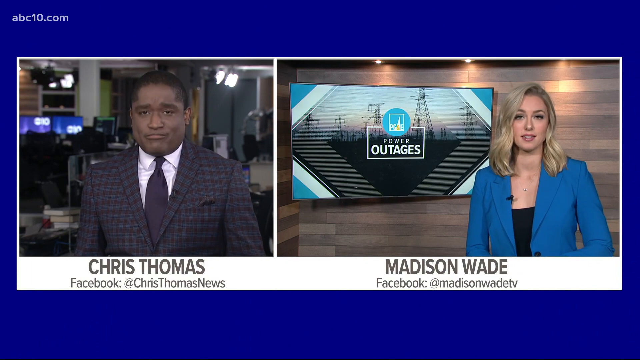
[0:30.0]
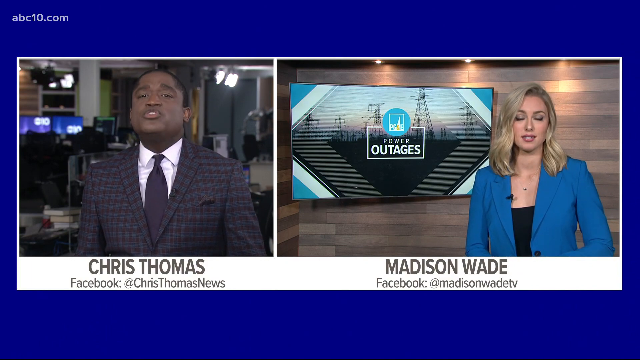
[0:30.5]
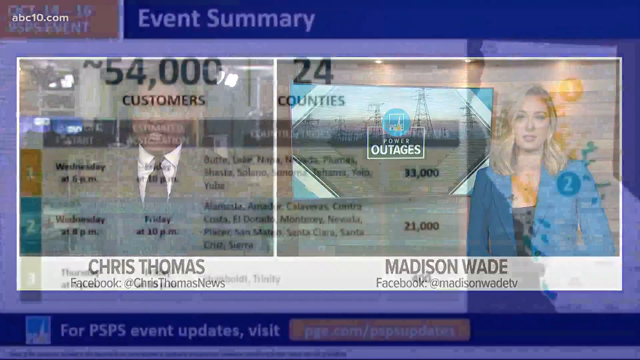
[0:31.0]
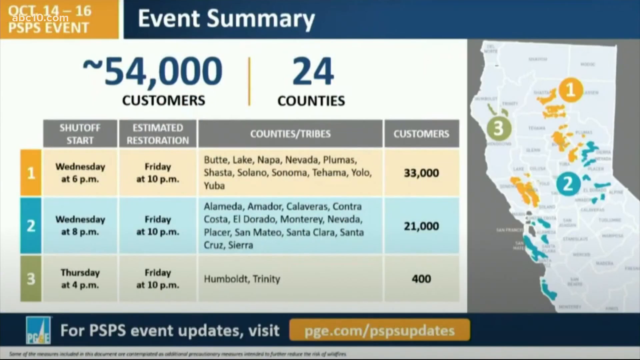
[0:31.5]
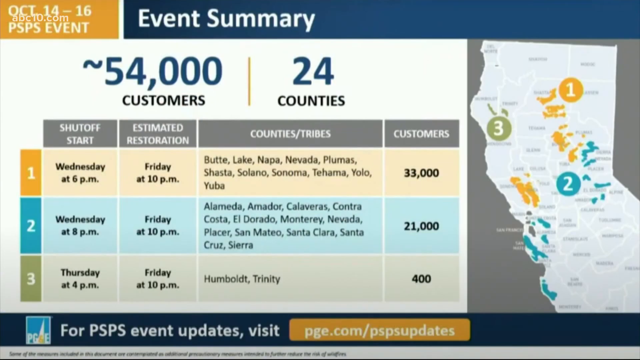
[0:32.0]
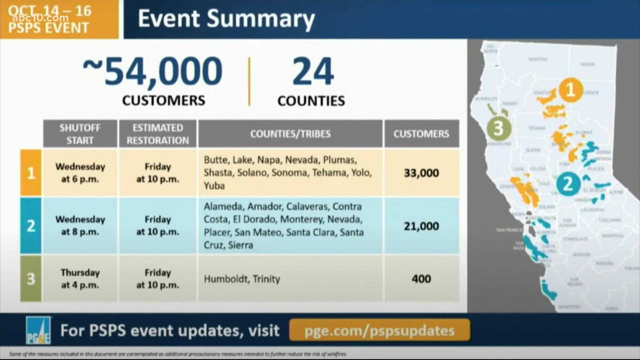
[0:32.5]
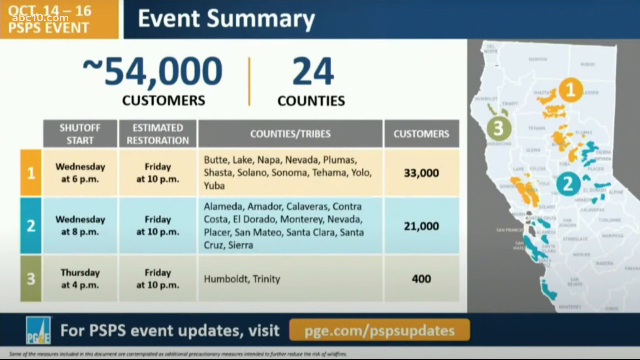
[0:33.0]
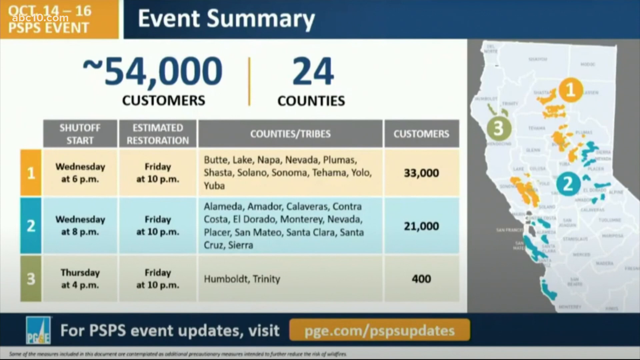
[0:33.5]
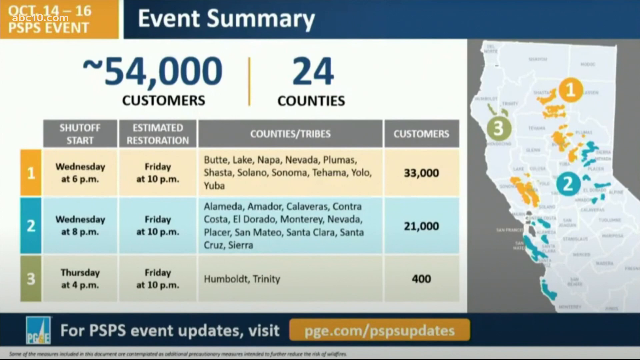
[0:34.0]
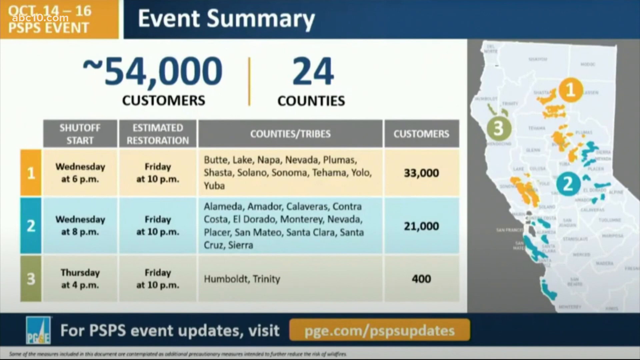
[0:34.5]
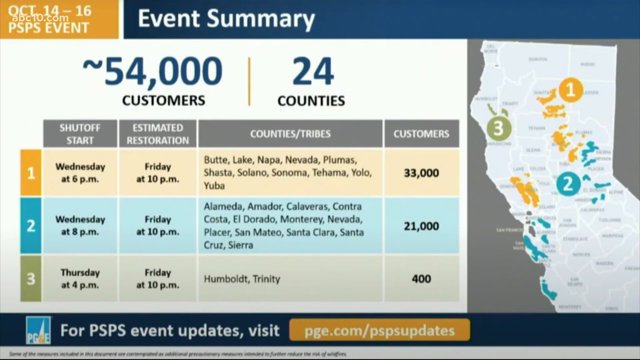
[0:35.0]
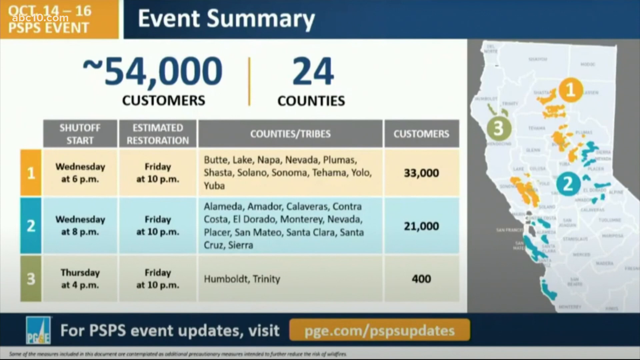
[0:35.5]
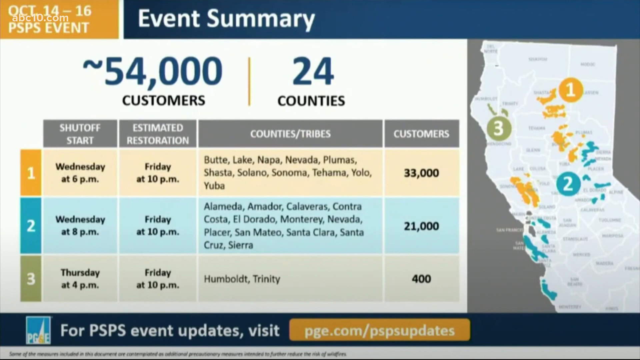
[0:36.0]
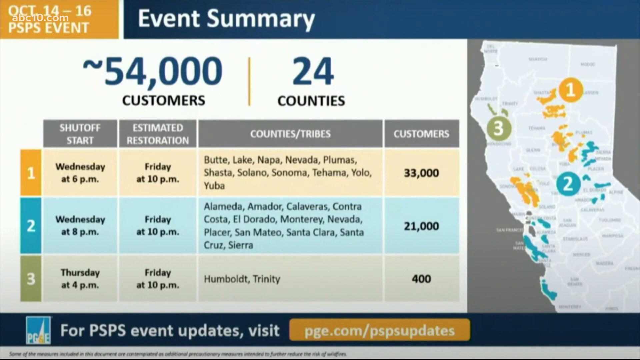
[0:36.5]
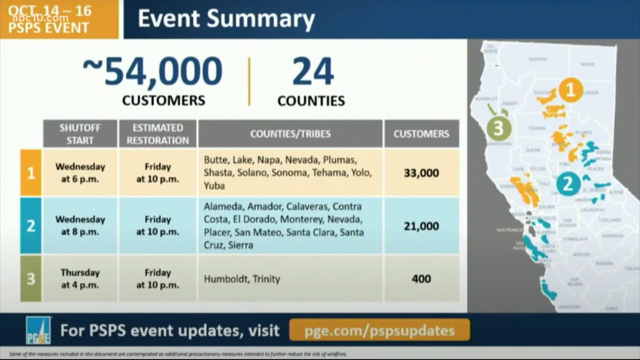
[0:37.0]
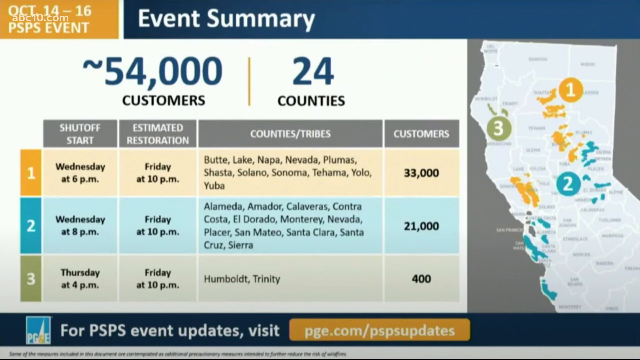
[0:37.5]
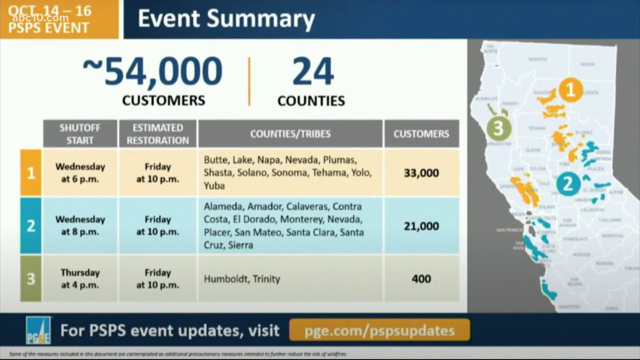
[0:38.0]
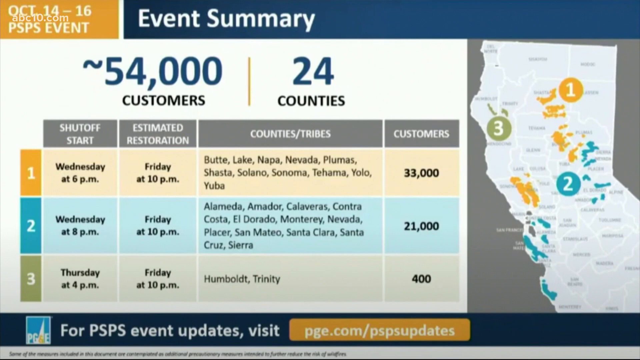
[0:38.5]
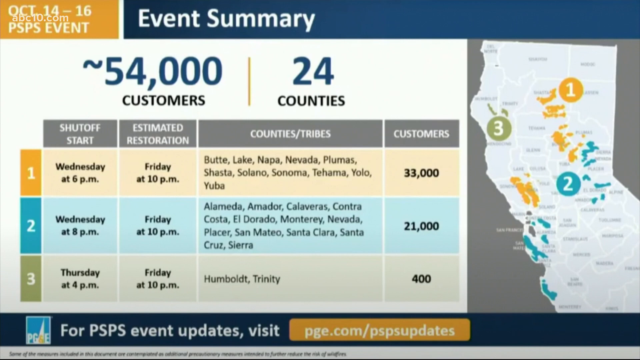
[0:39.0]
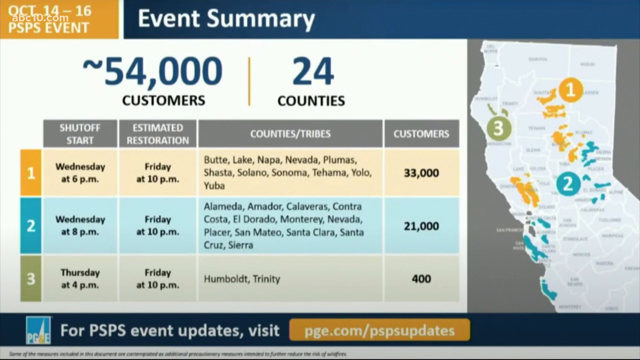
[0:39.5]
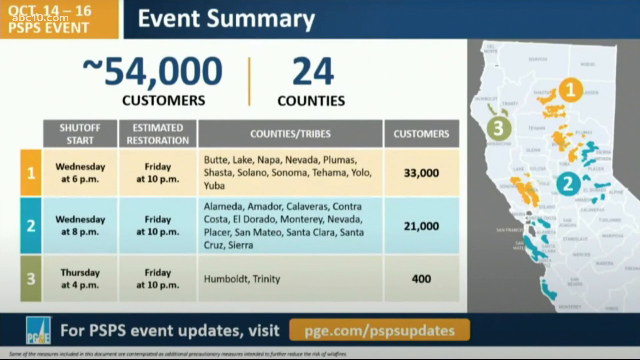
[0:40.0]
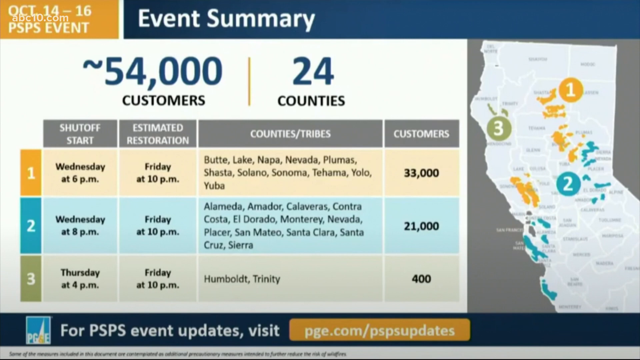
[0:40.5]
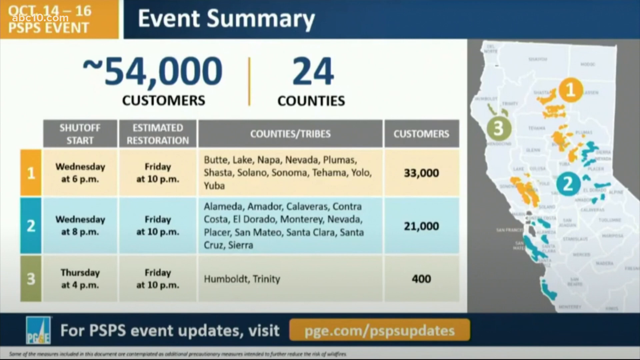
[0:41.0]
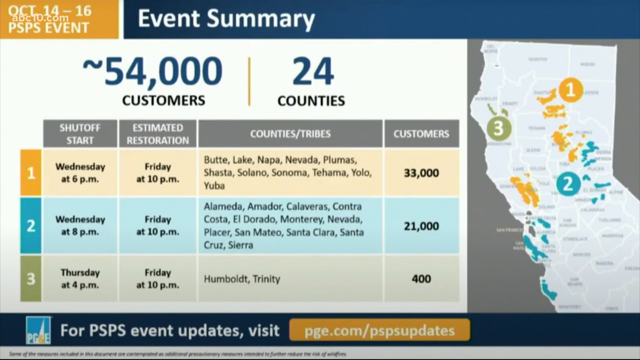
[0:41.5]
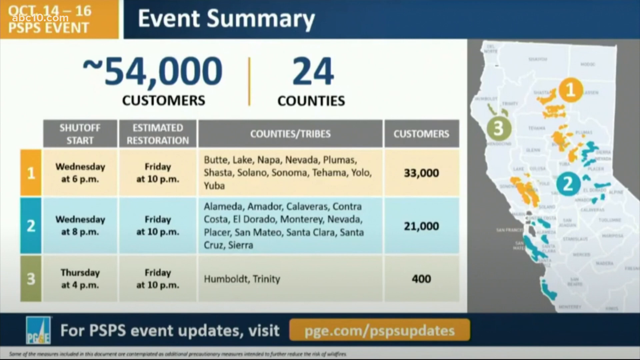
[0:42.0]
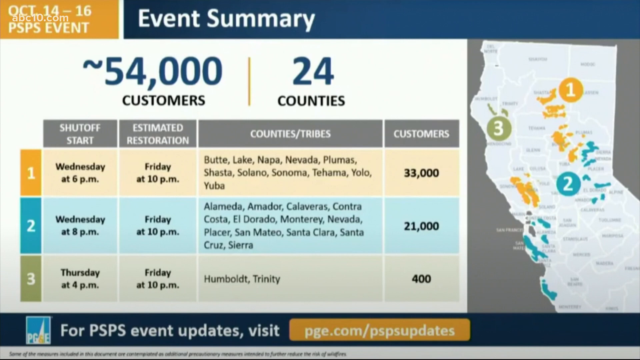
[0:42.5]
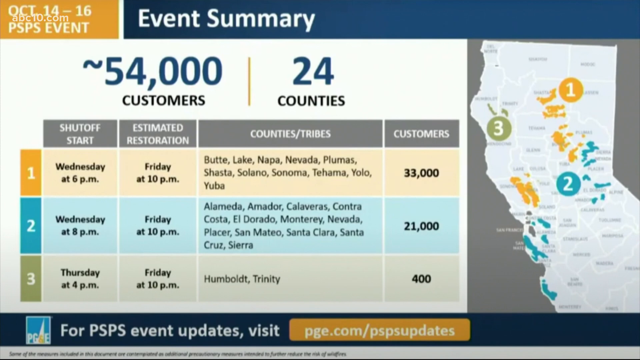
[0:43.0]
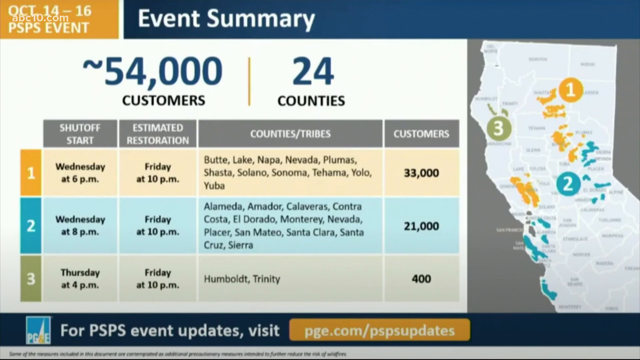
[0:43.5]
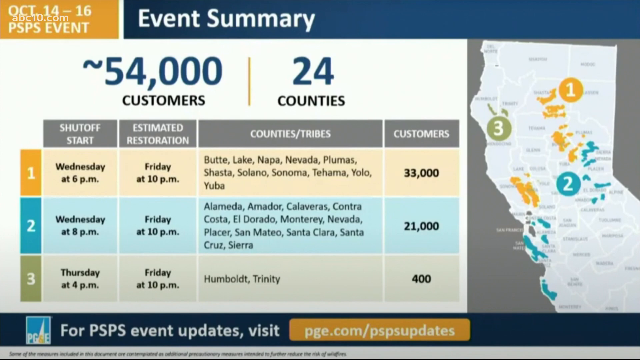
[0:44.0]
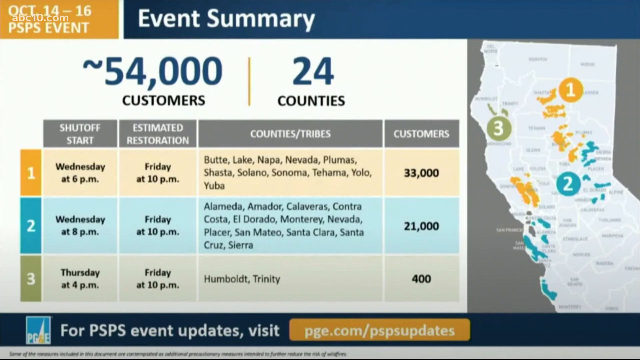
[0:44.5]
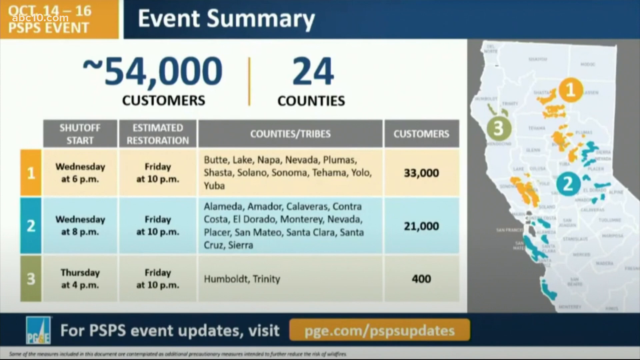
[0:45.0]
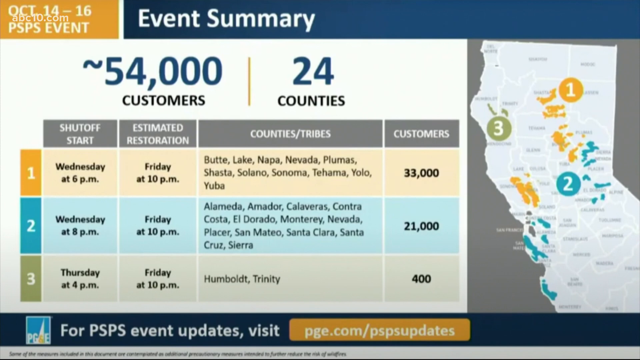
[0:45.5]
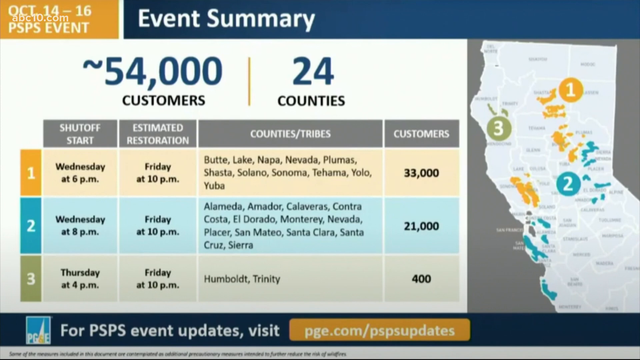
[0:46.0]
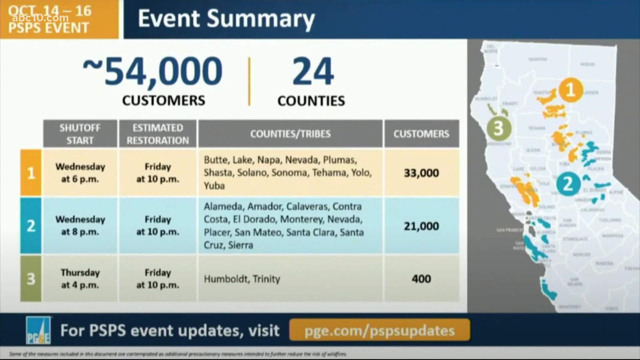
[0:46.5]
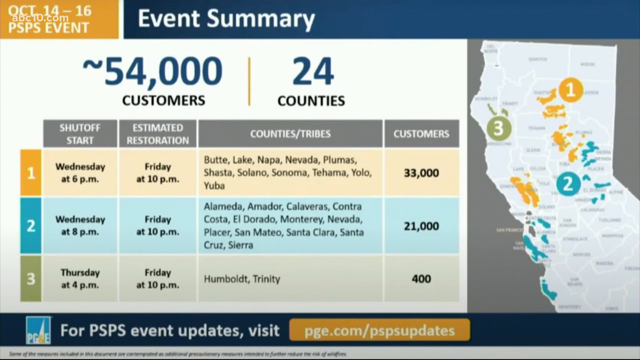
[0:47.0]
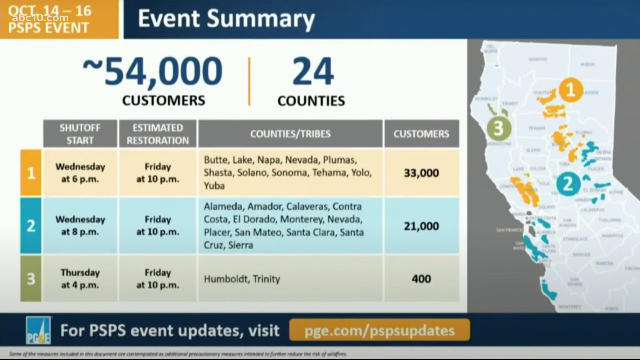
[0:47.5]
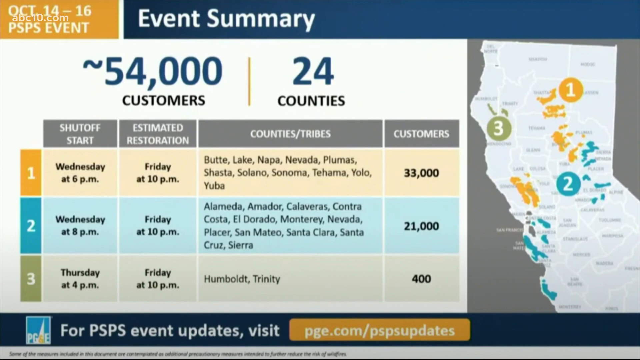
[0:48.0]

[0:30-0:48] The two broadcasters transition away as a new image is displayed, a close-up of the expected power outages. On the right is a white map area of California with three specific power outages marked in circular shapes numbered one, two and three, and colored areas on the map showing where the outages will occur. To the left of the map is a large diagram reporting the 54,000 customers in the 24 counties to be impacted. A column on the left lists the dates with the shut-off start times, the next column shows the estimated restoration days and times, another column lists the counties or tribes impacted, with names such as Butte, Lake Napa, Nevada, Plumas and Shasta, and the far right column gives the numbers of customers impacted: 33,000, 21,000 and 400. The display is very colorful and remains on screen. A title bar across the top reads "Event Summary" along with the date.